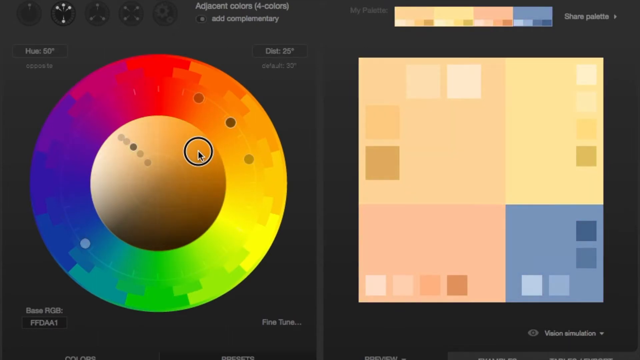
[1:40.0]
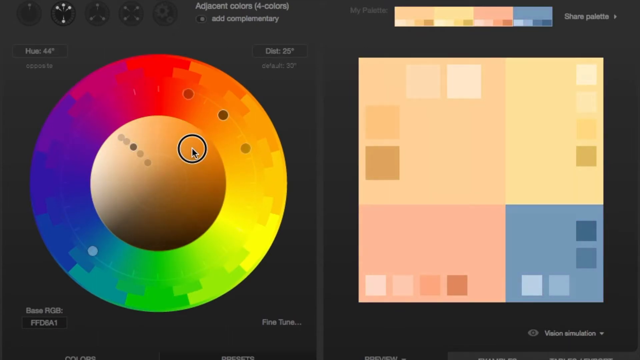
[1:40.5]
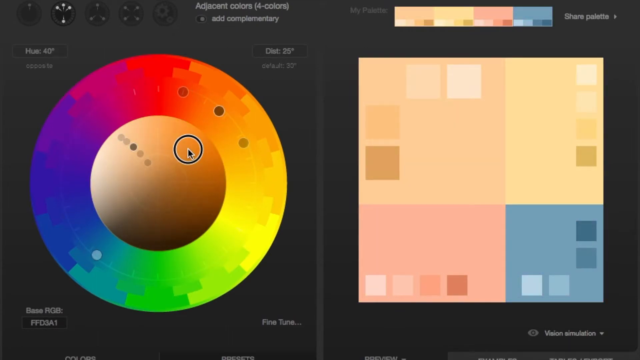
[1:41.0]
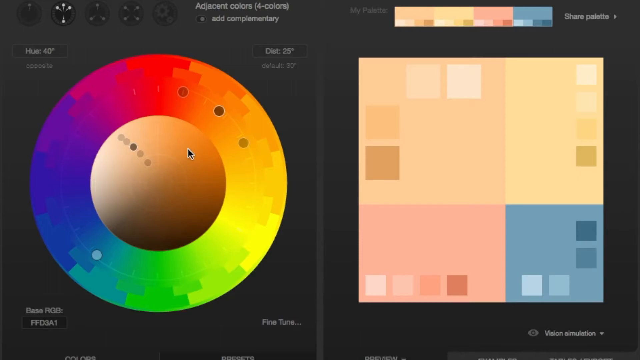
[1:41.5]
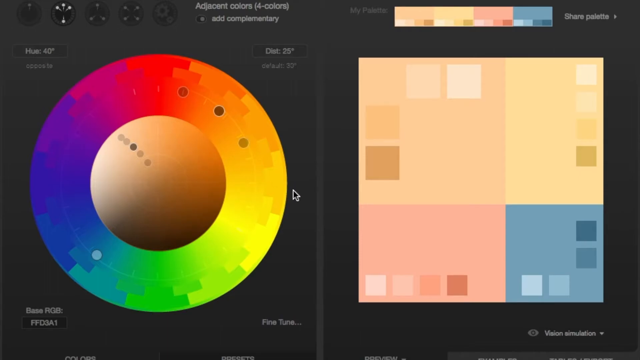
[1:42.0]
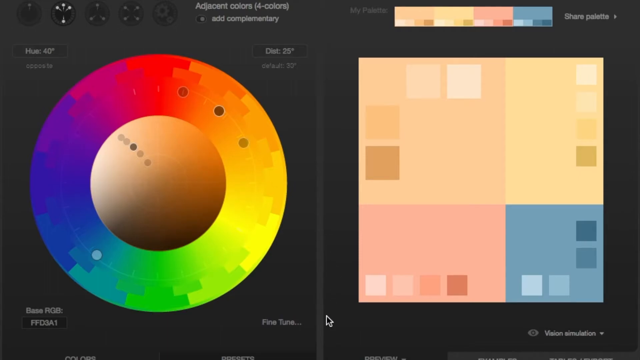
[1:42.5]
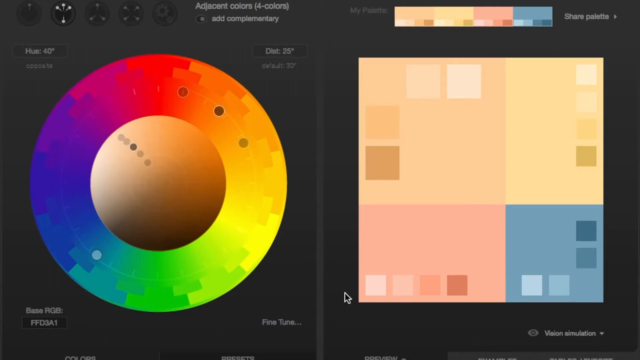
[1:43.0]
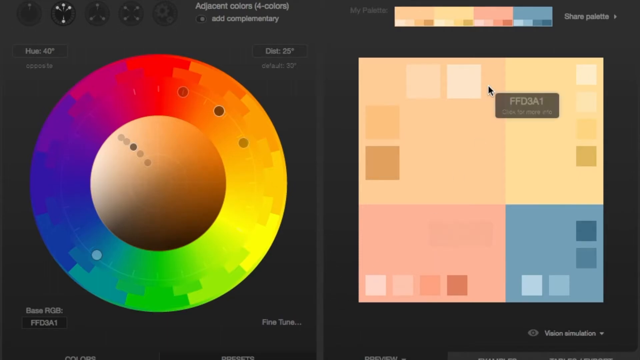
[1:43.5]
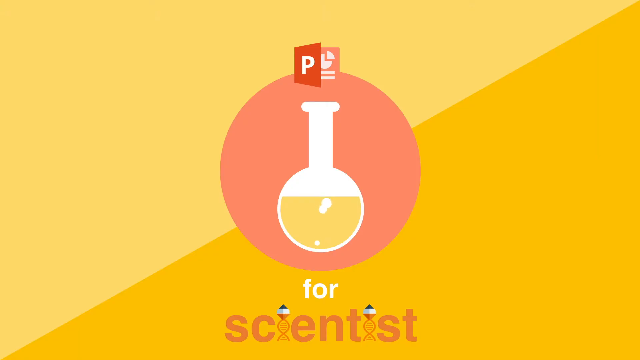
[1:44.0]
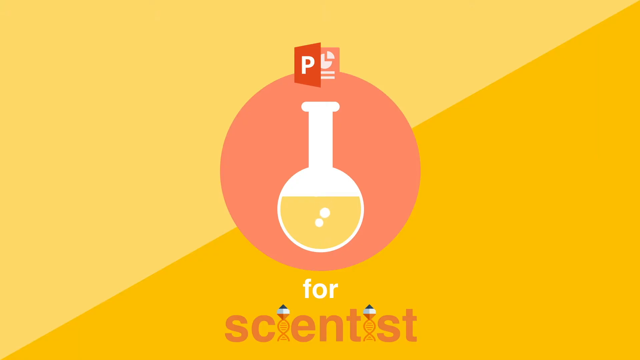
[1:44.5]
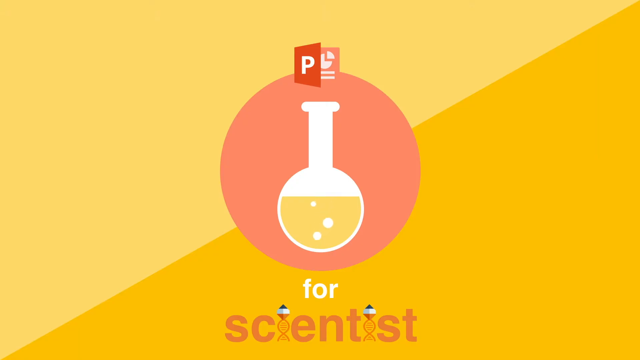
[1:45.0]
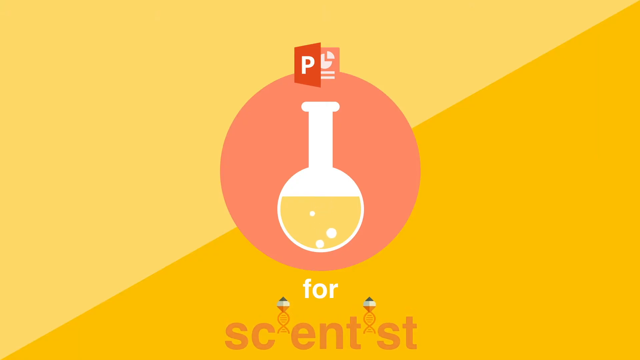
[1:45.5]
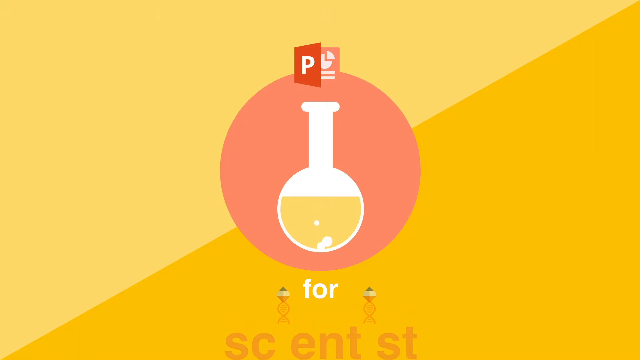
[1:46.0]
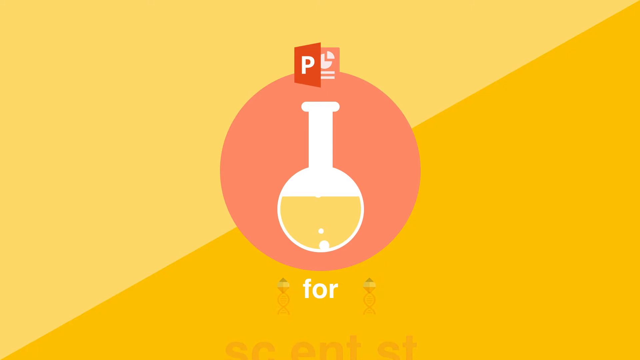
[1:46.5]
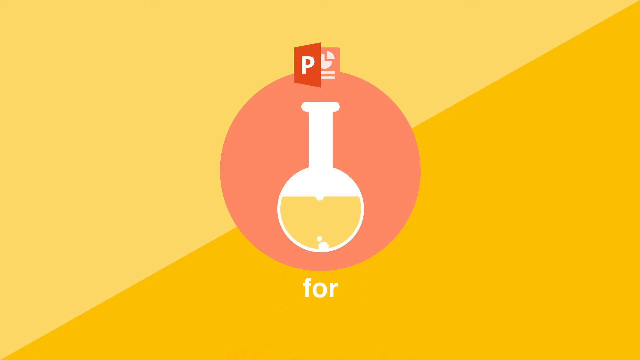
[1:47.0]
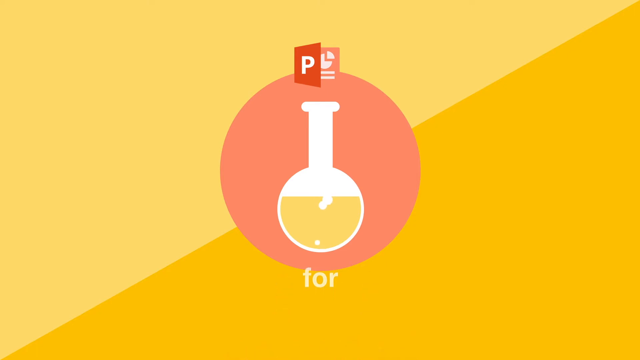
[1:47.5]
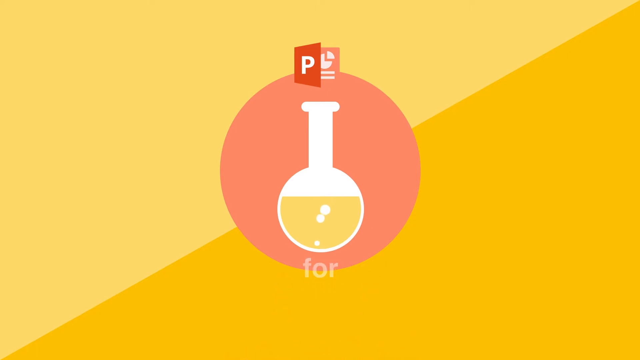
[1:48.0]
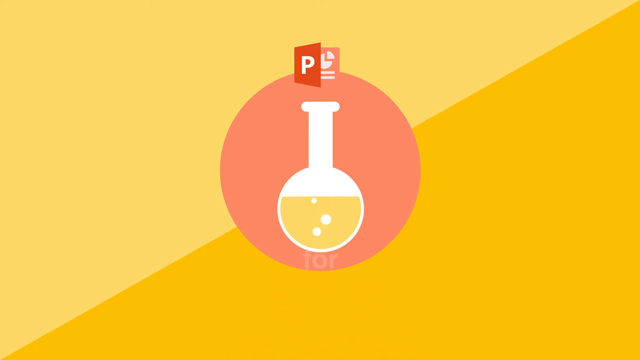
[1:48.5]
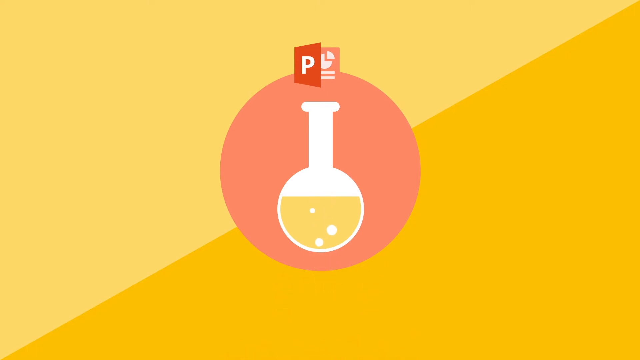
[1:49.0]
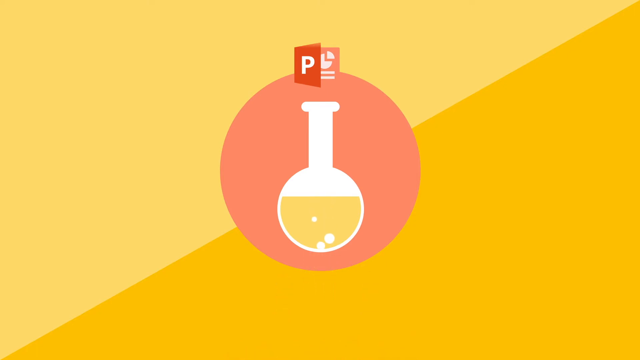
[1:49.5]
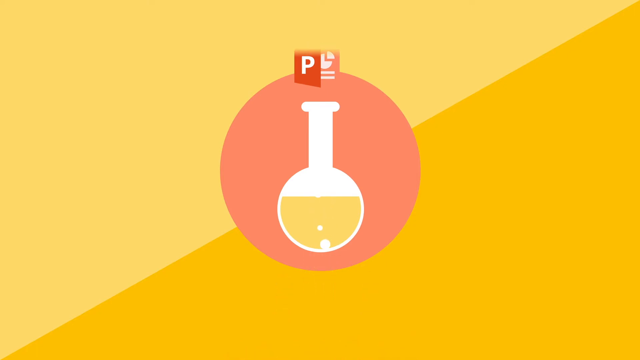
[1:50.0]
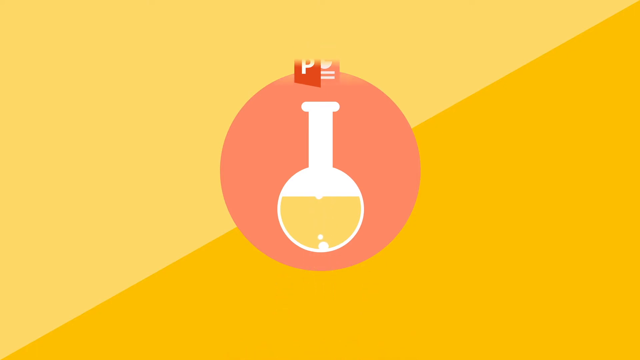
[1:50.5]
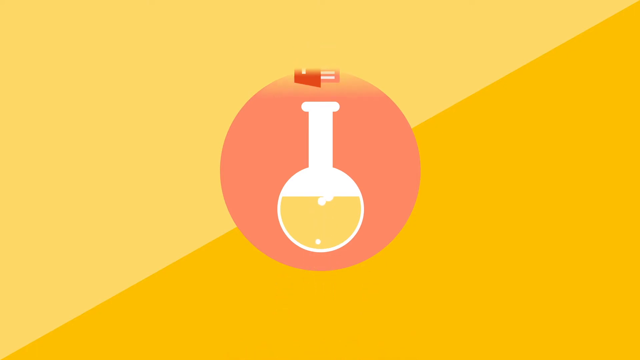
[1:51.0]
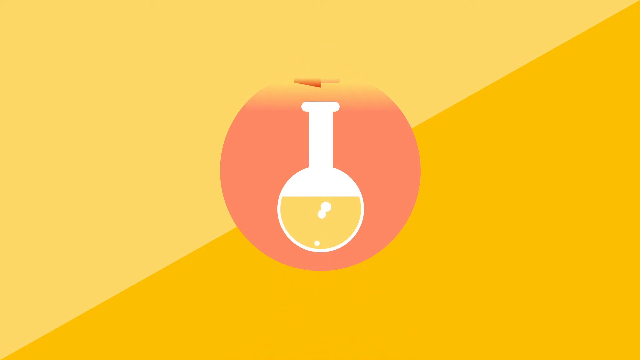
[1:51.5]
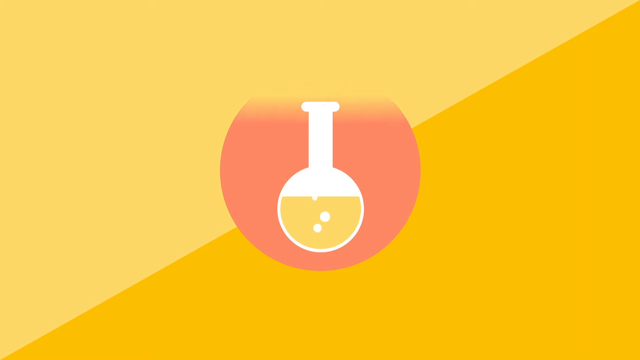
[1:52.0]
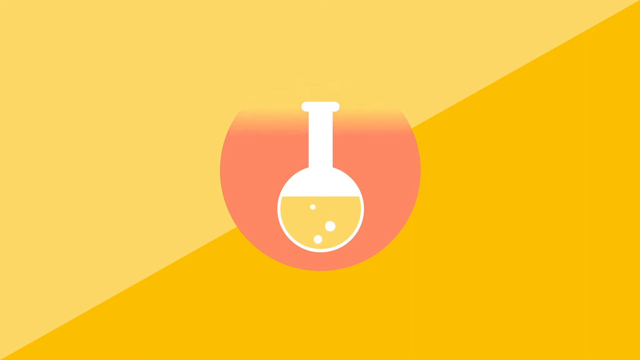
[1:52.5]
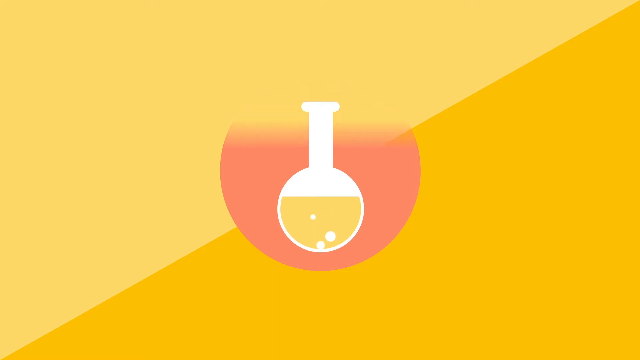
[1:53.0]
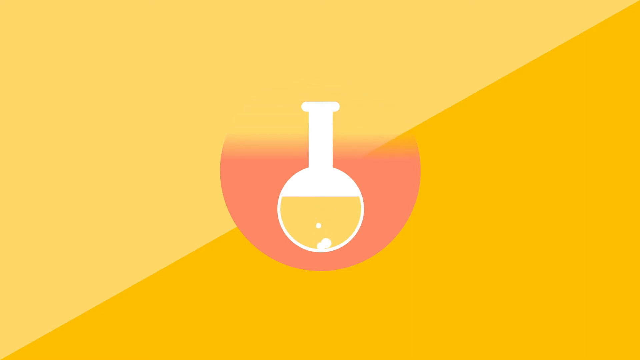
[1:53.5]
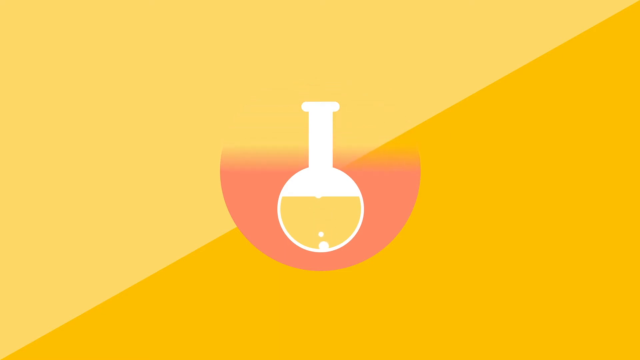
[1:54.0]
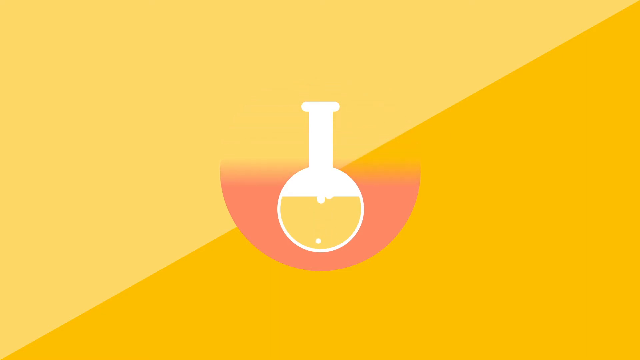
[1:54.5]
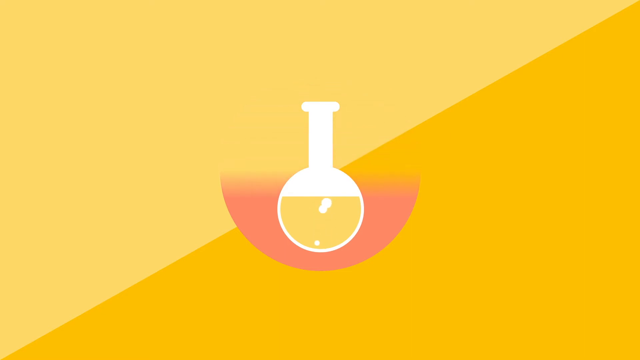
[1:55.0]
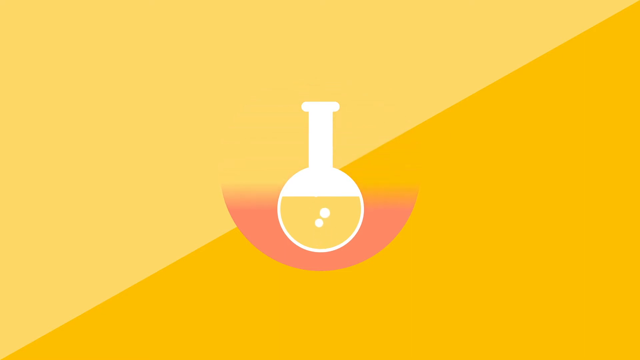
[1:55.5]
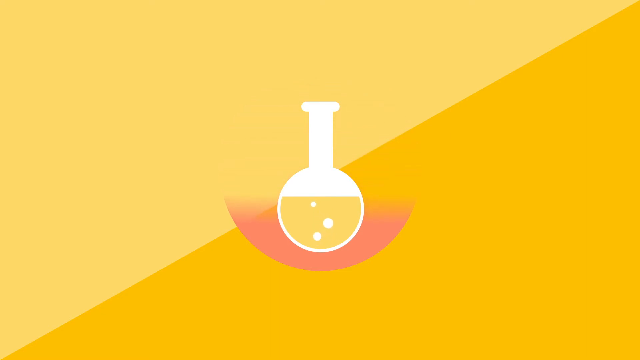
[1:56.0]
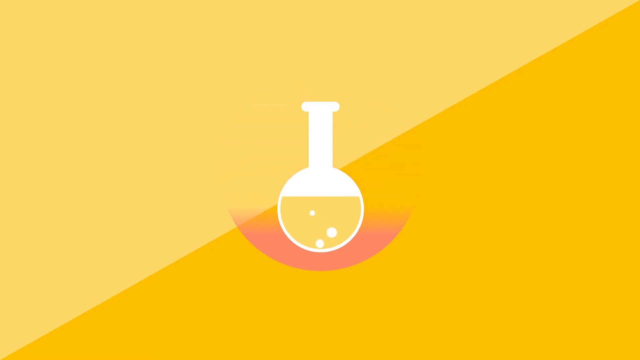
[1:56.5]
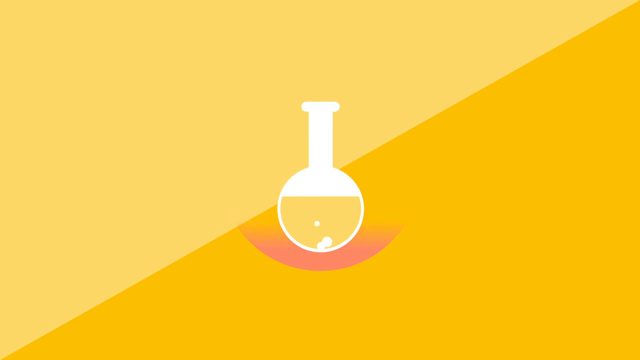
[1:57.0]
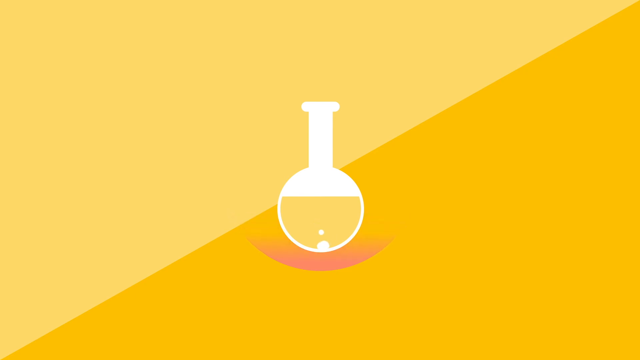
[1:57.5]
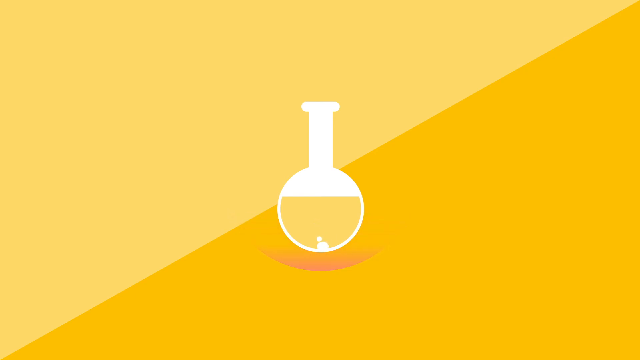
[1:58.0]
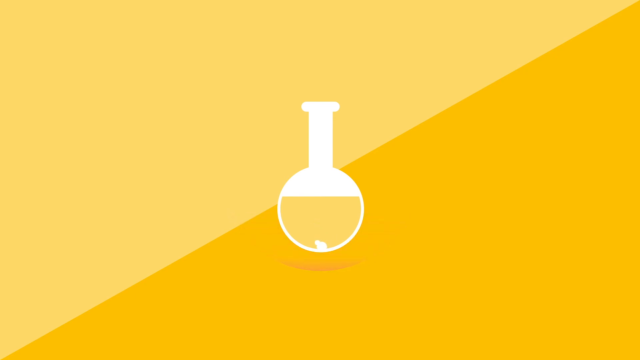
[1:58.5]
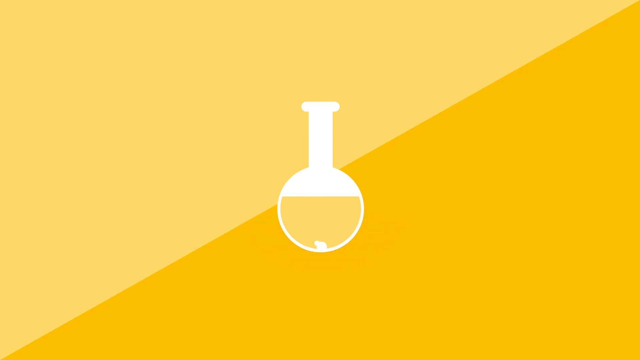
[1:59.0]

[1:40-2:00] On a black background, the screen is split into two sections. The left section shows a round color wheel with shades of blue, violet, red, orange, yellow, green and turquoise, and the colors spin around in the circle. A cursor moves across the screen over the yellow, orange and red area of the circle. The cursor then moves over to the right side of the screen, where there is a square made up of four uneven sections: the top left section is blush, the section next to it is pale yellow, the lower left section is pink and the lower right section is powder blue. The screen seen earlier in the video then appears: the split screen divided into two triangles, the top one paler yellow and the bottom one vibrant goldenrod yellow. In the middle is the peach circle, and within it the glass beaker with yellow liquid covering three quarters of the beaker, with 3 little air bubbles popping up from the bottom of the beaker. Beneath this are the words "for scientists".